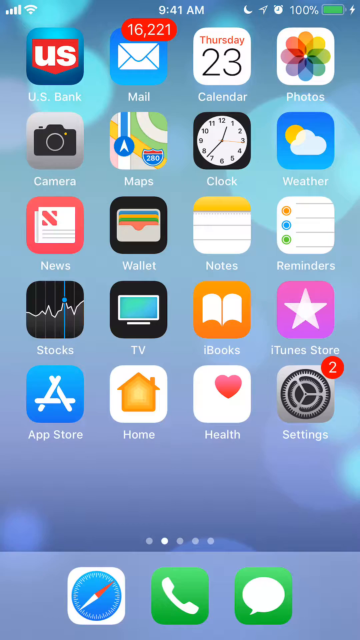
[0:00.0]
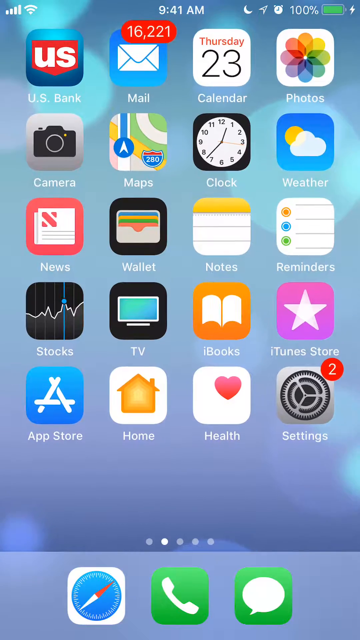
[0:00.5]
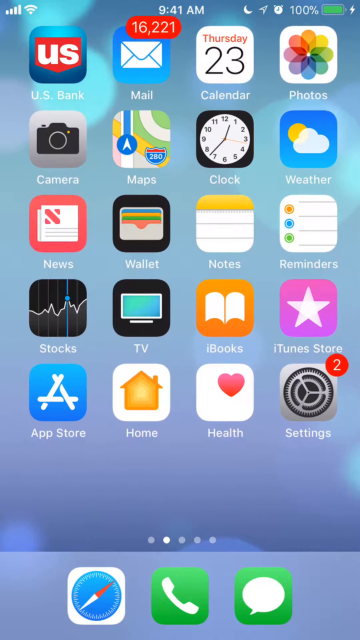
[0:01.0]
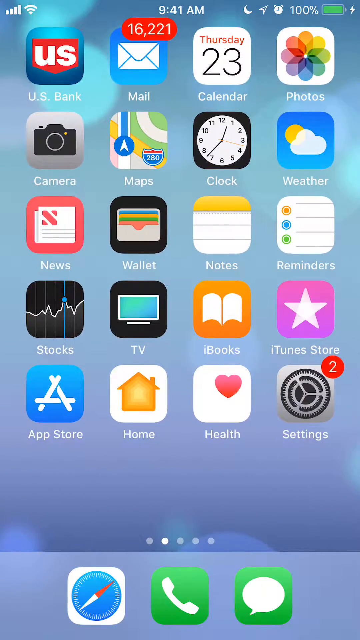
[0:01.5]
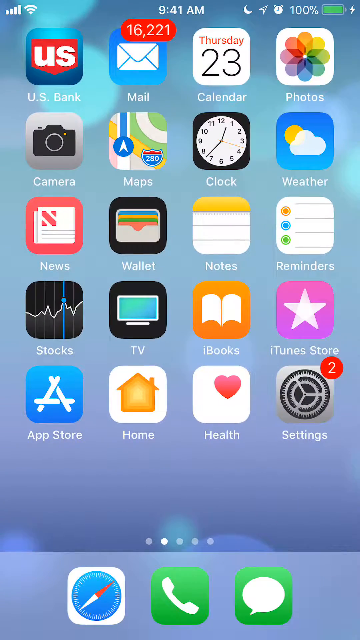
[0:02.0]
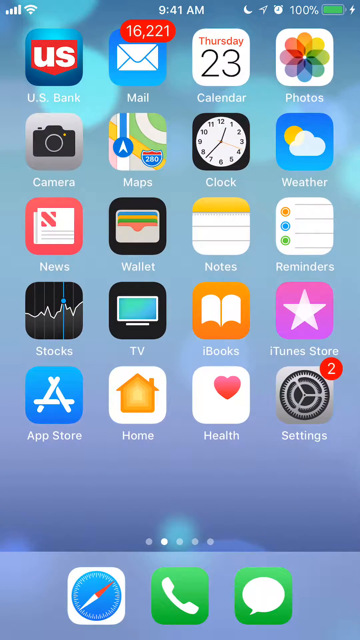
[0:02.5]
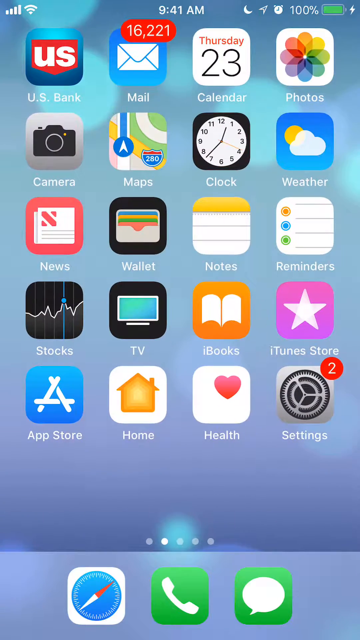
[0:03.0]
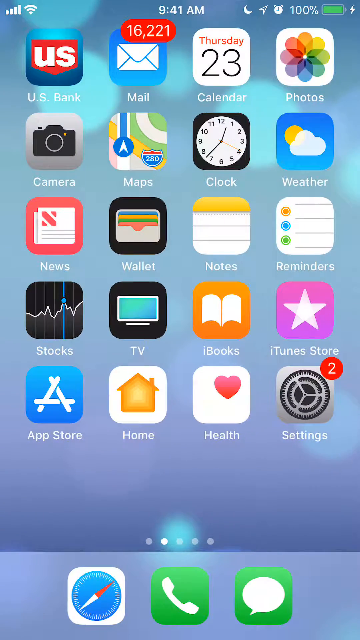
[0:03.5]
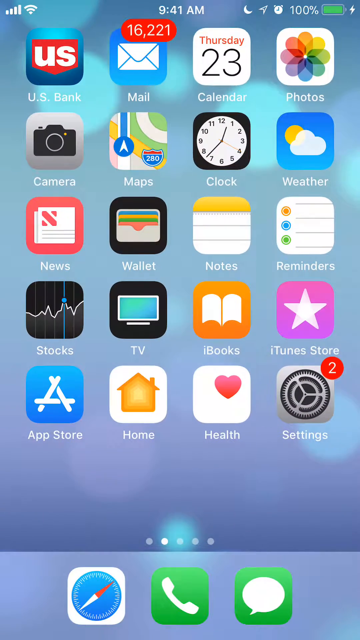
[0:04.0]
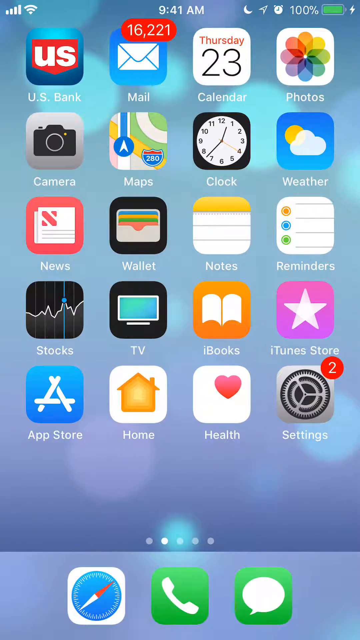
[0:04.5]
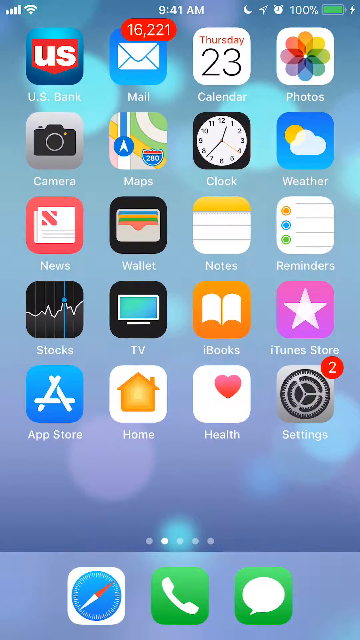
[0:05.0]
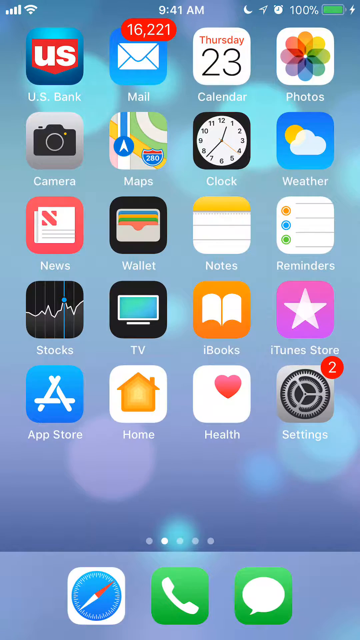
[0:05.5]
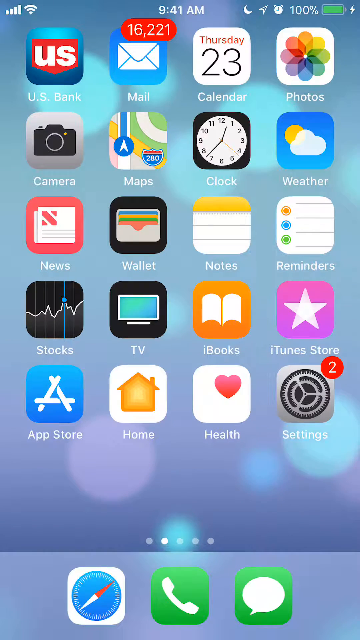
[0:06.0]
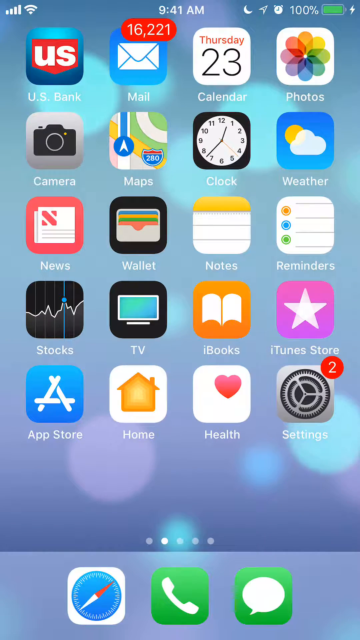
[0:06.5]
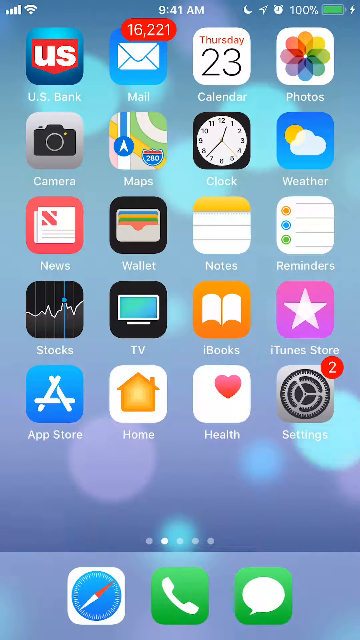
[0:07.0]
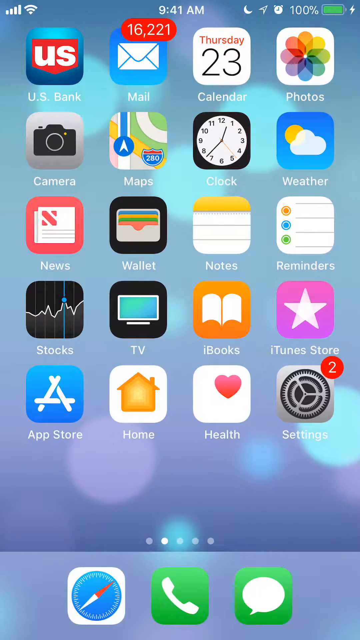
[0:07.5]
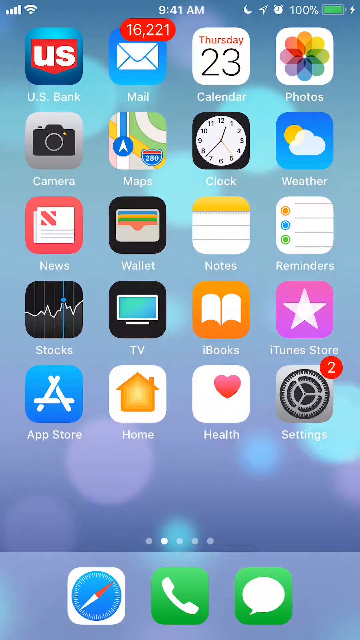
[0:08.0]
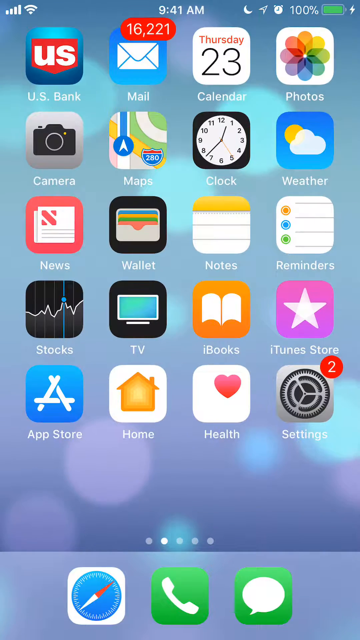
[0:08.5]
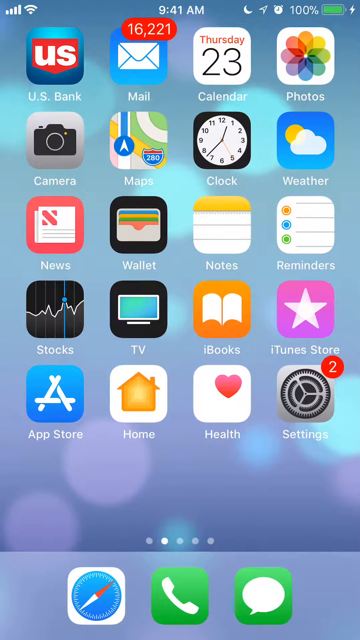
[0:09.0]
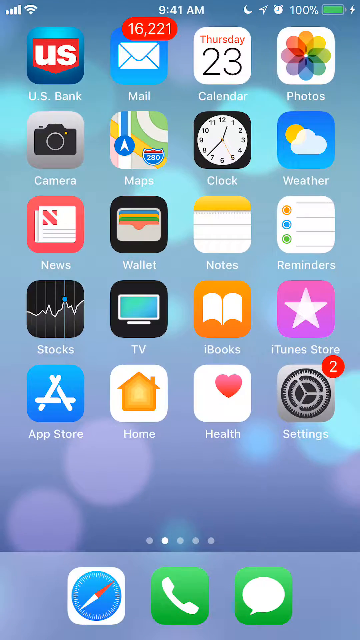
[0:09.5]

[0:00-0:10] The video opens on a screen recording of an iPhone, which looks to be running iOS 7 or similar. The background has orbs that move slightly. The time is 9.41am, and the battery is at 100% with the phone charging. A mail icon shows 16,221 unread messages, and a calendar icon reads Thursday the 23rd. Other icons include photos, US bank, camera, maps, clock, weather, news, wallet, notes, reminders, stocks, TV, iBooks, iTunes store, app store, home, health and settings. The settings icon has two unread notifications, and page indicators show five different pages of apps. The bottom dock holds safari, phone and messages icons.